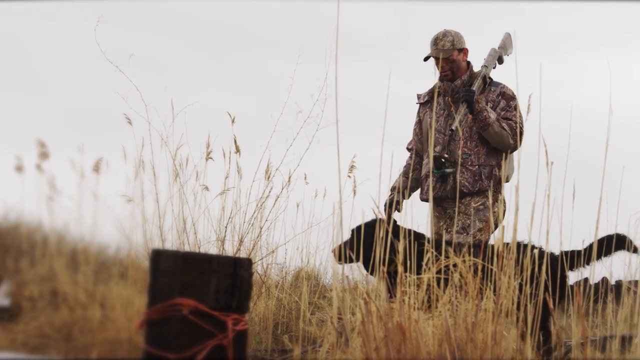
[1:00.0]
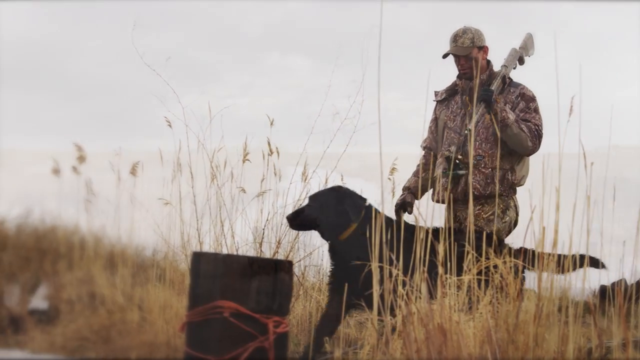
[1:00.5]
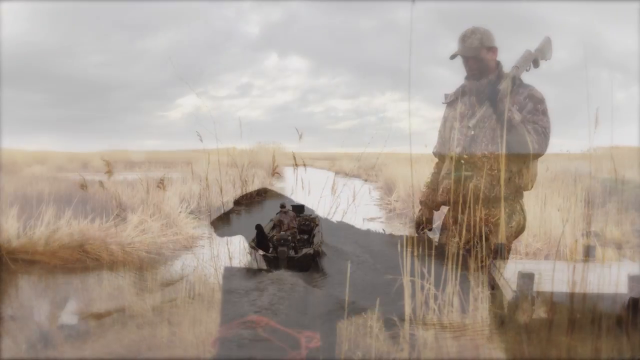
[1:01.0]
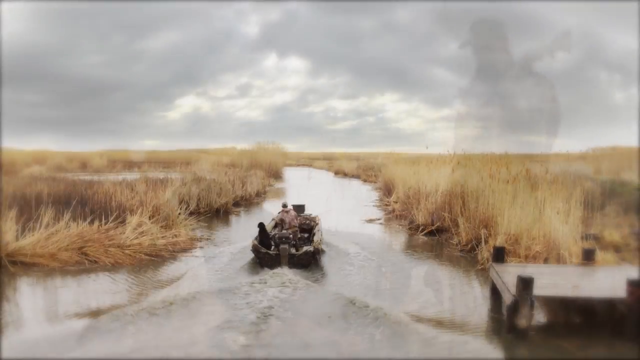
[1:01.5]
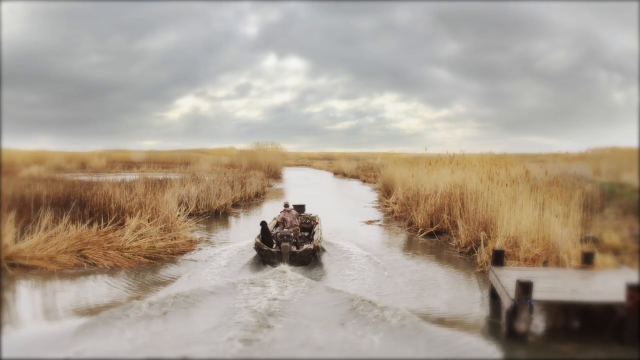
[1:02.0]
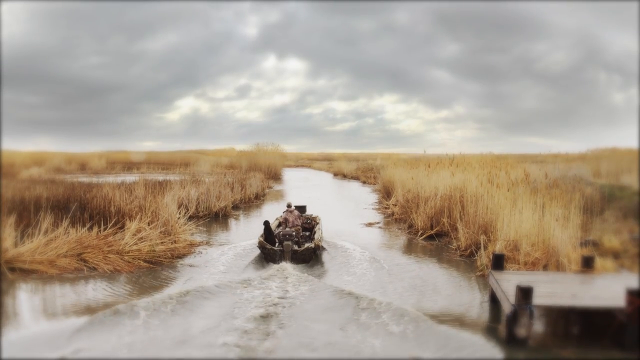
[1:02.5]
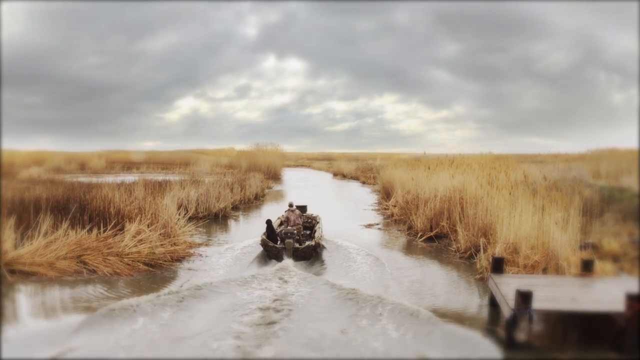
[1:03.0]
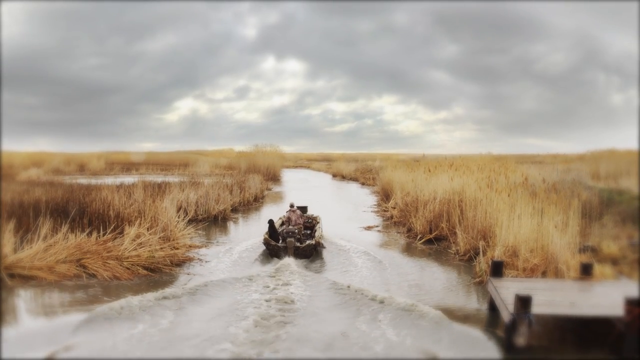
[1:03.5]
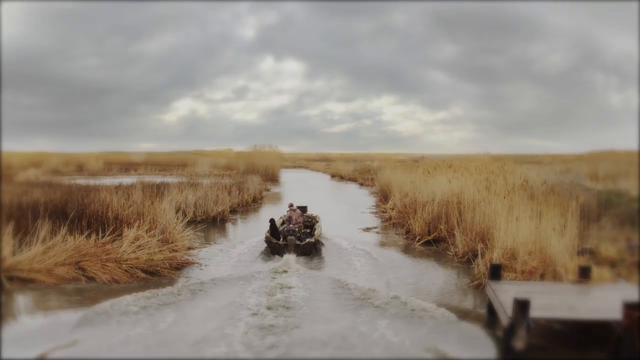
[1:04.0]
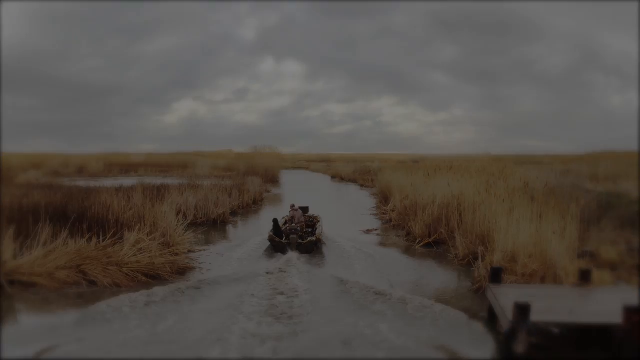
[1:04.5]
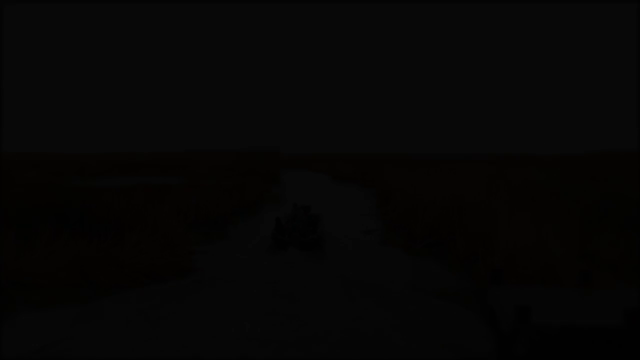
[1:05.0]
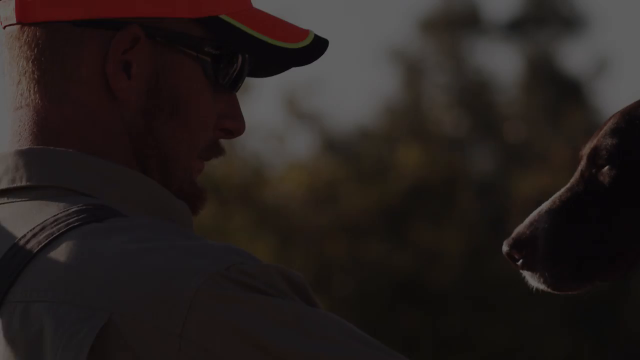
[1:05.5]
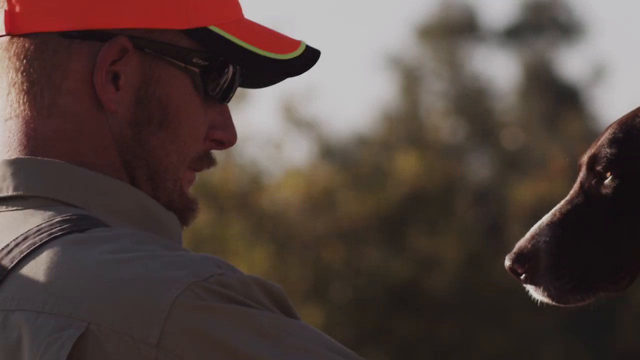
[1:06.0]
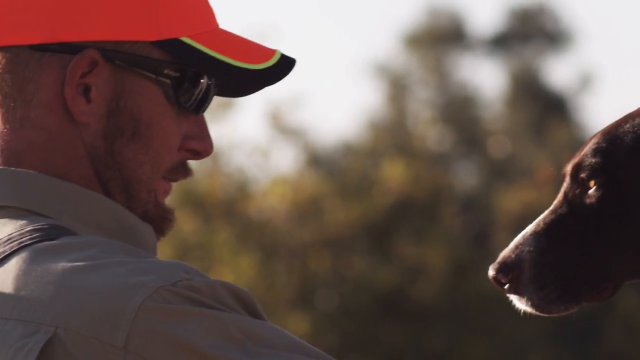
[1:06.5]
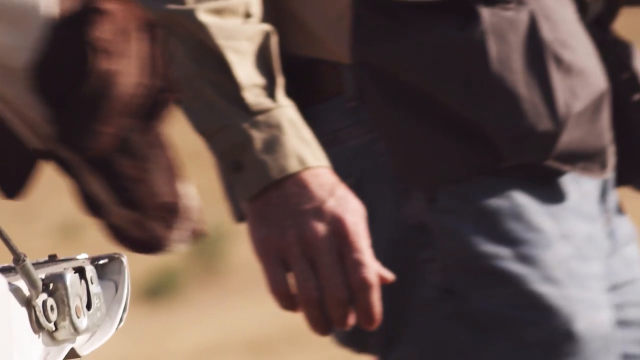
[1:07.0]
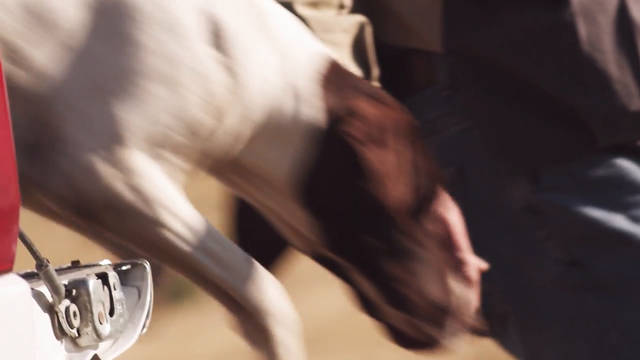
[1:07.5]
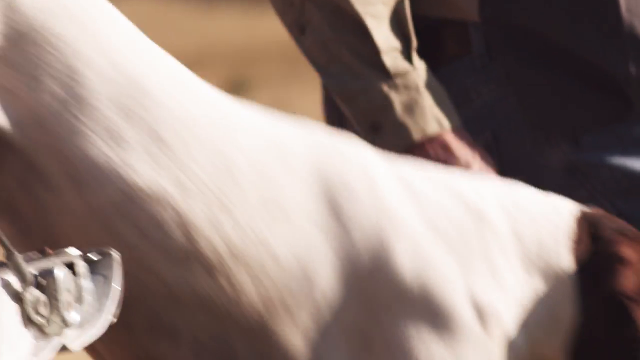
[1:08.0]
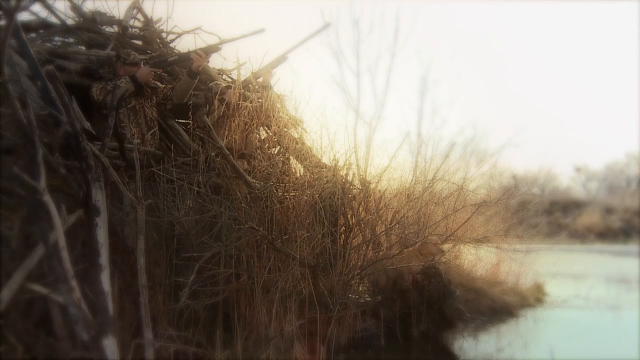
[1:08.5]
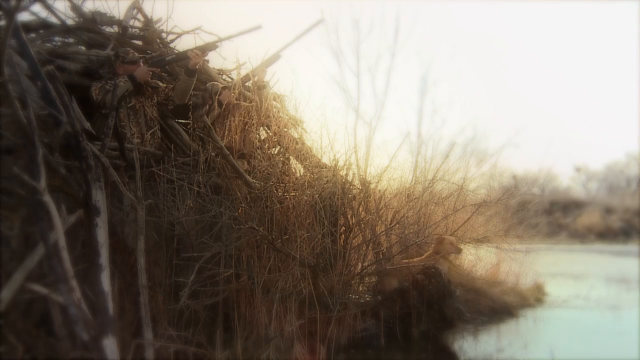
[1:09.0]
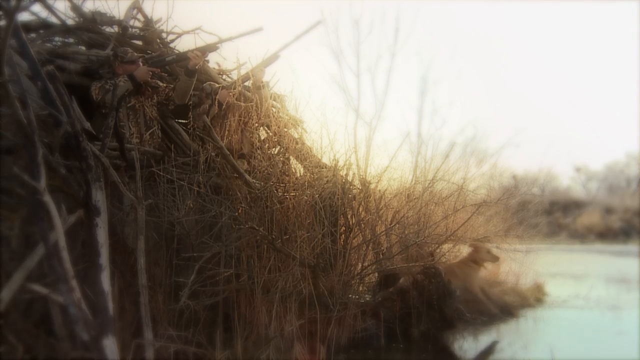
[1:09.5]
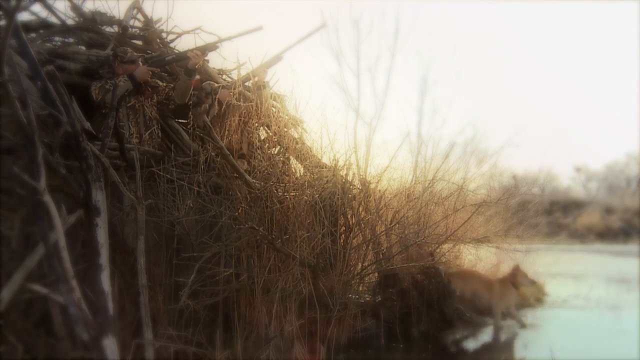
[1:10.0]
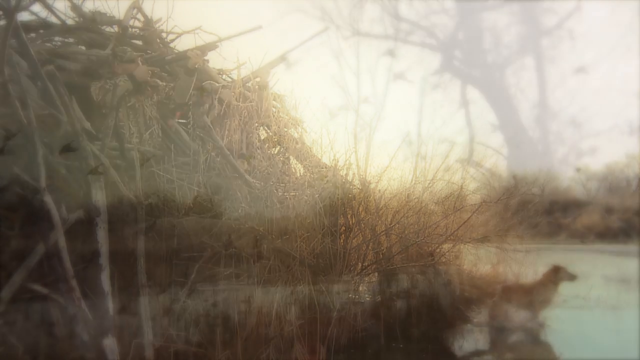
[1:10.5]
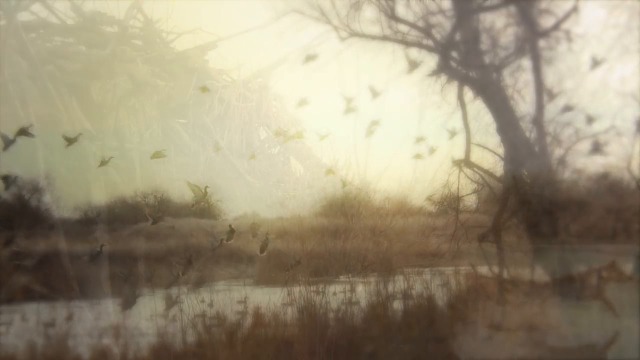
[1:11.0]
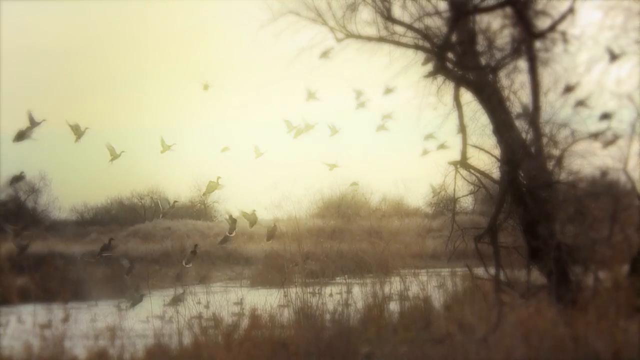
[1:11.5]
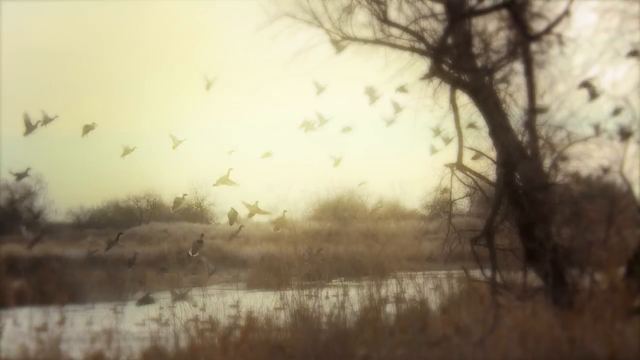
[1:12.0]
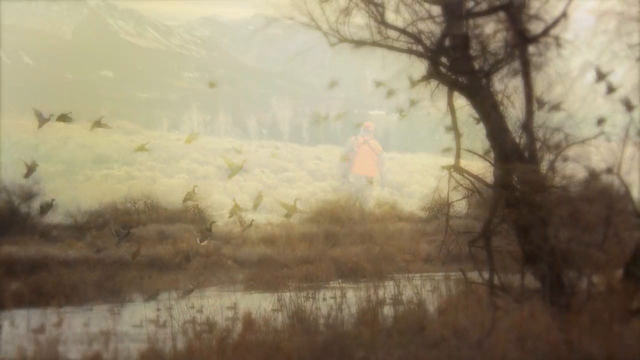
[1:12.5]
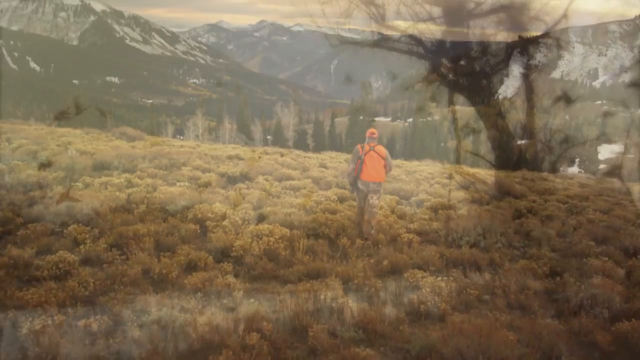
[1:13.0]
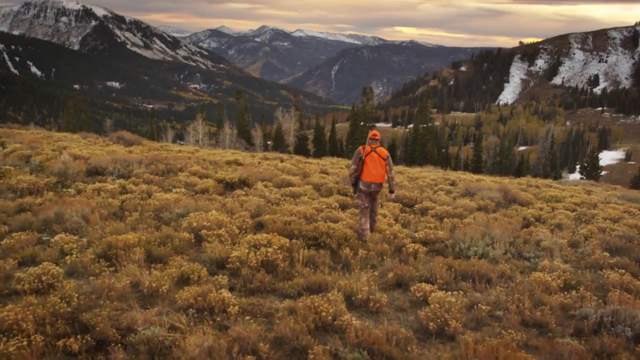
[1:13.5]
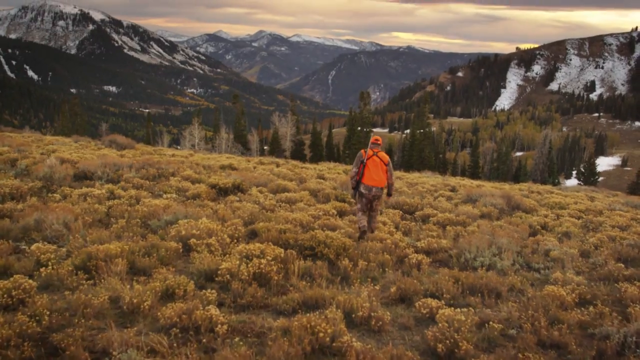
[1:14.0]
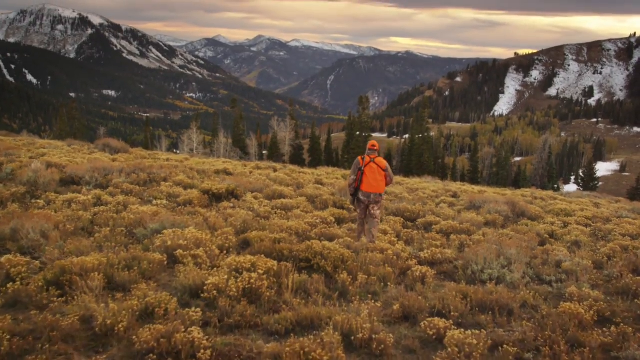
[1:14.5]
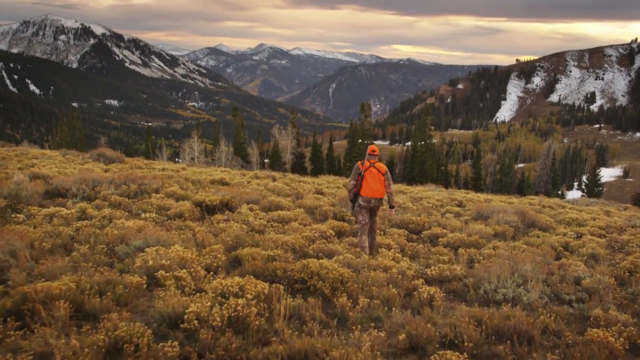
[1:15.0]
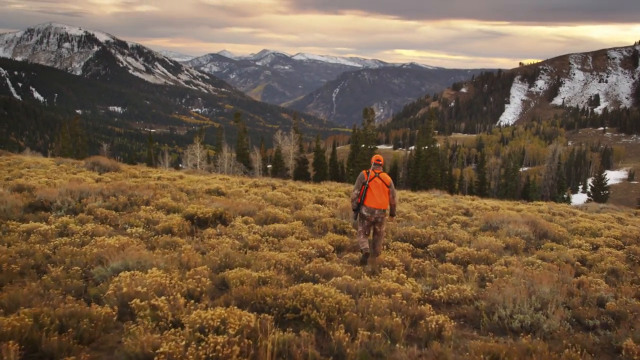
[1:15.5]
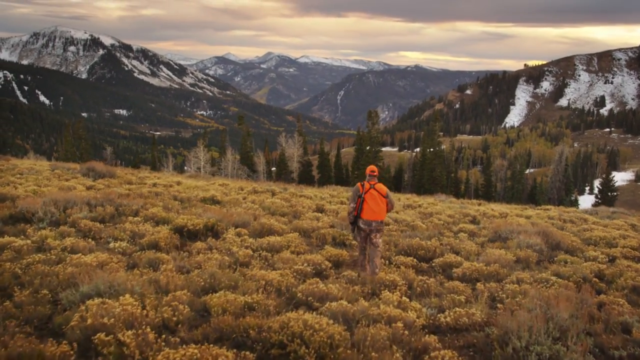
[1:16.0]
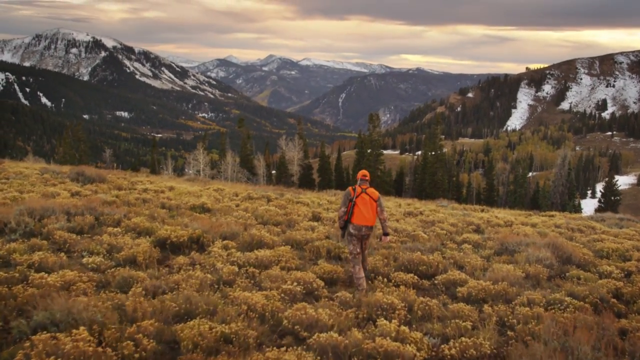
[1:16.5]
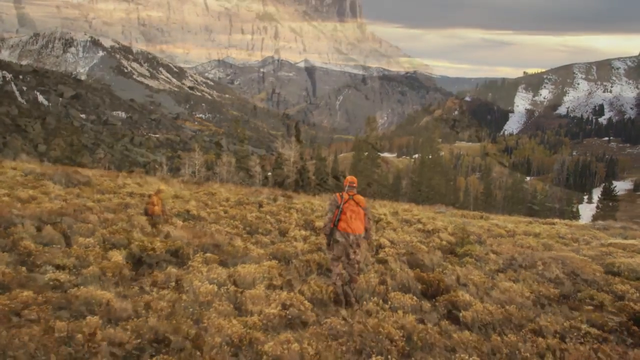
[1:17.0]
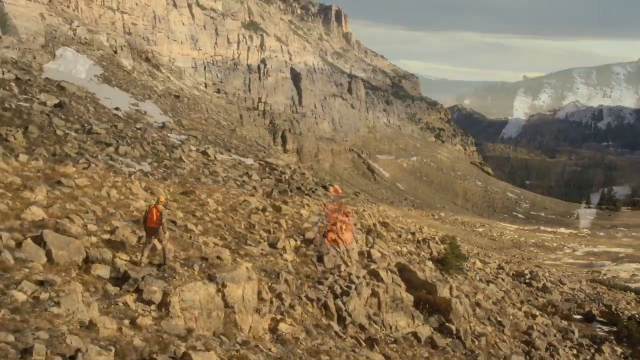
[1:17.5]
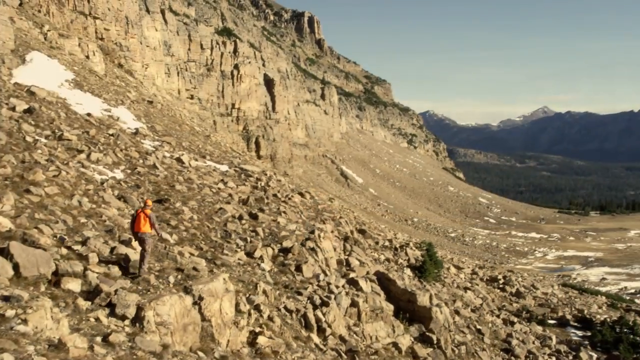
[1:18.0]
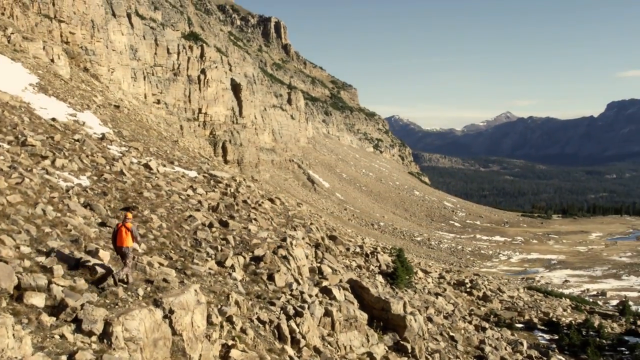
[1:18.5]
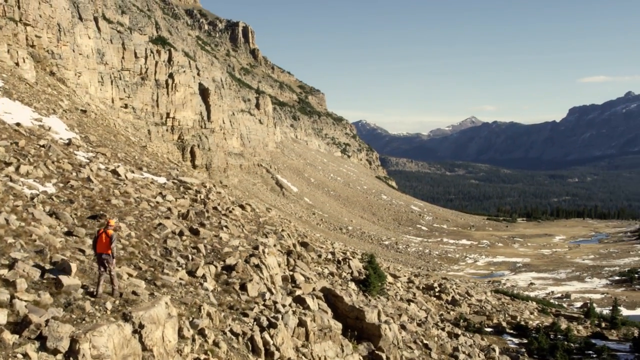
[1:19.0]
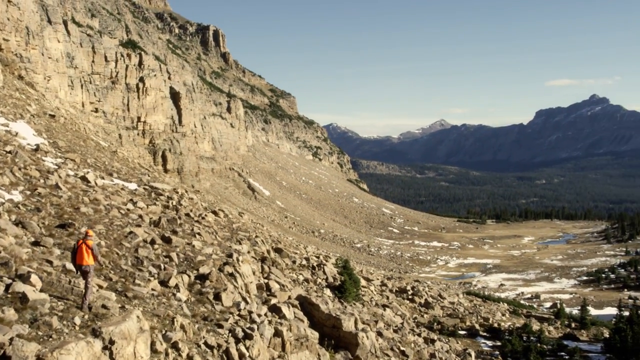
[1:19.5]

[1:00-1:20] The hunter continues walking in his camouflaged clothes and a matching camouflaged cap. They walk across a brown pasture and get into a small boat in the middle of the river, and a lake appears stretching across the whole landscape. Another dog, light-colored, appears, and then thousands of birds take off and fly away. Mountains with snow-capped peaks appear in the background as the hunter in orange clothes walks through the forest toward them. The mountains get closer as he walks on, into a more desolate environment with much less vegetation and fewer animals.